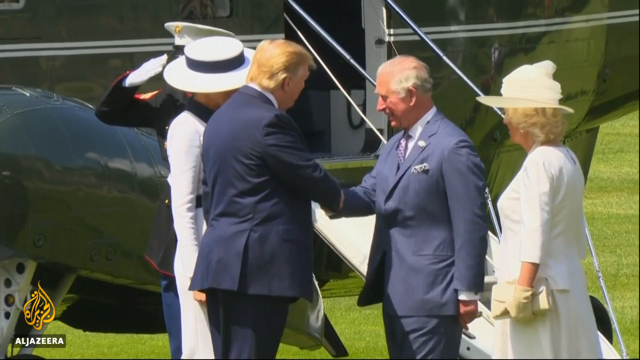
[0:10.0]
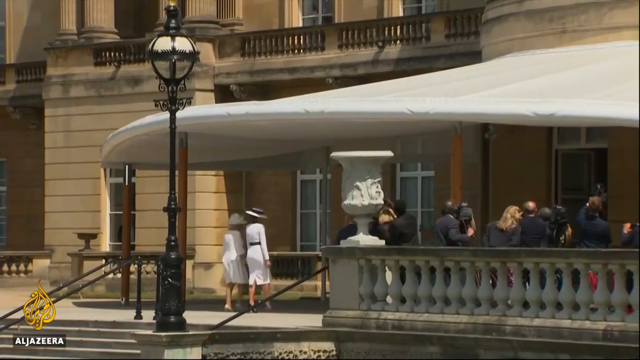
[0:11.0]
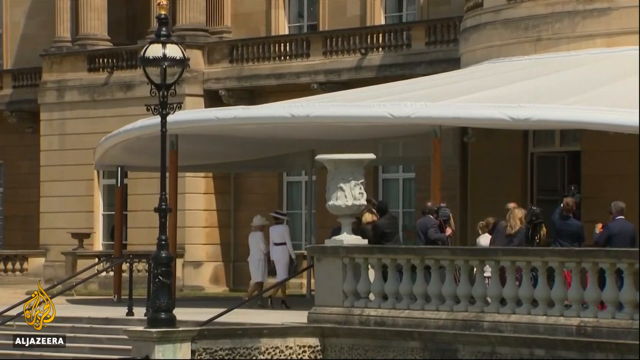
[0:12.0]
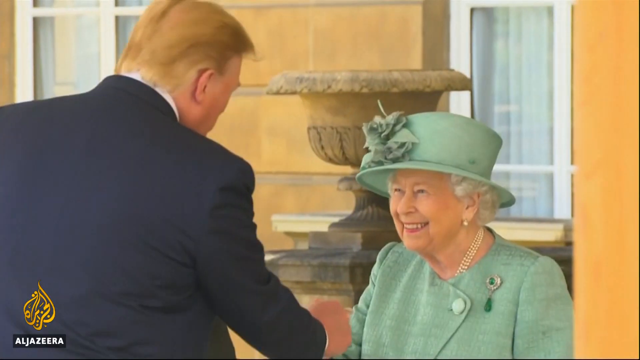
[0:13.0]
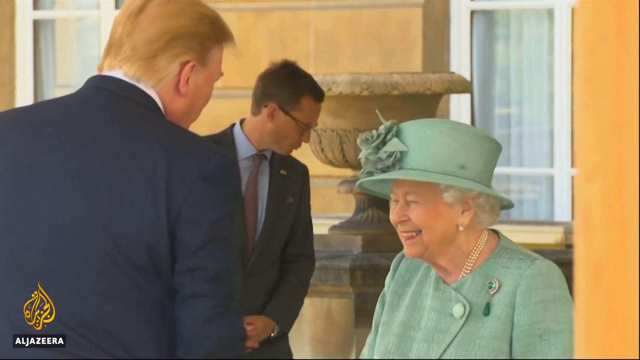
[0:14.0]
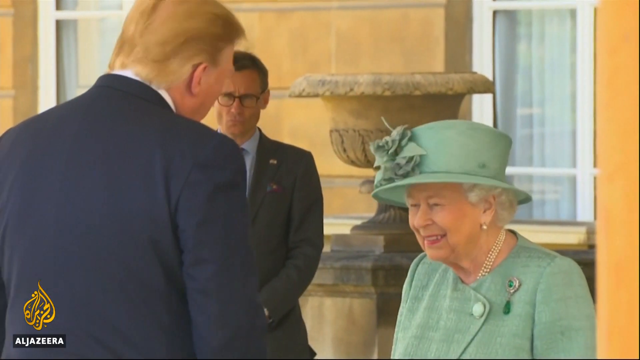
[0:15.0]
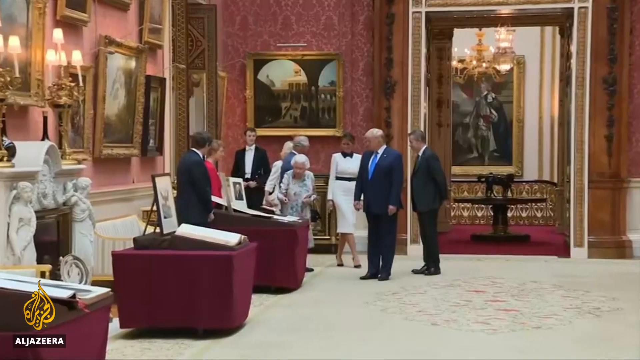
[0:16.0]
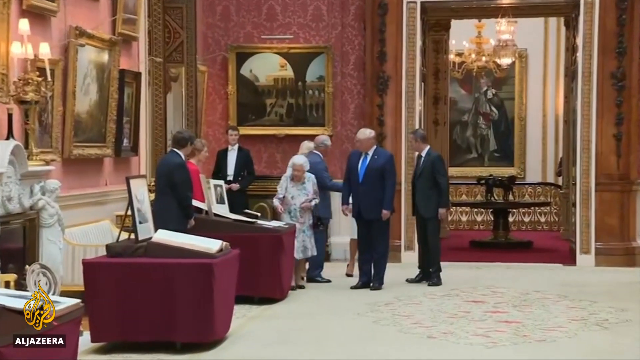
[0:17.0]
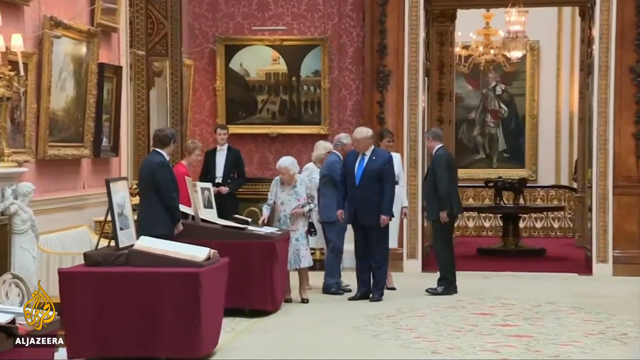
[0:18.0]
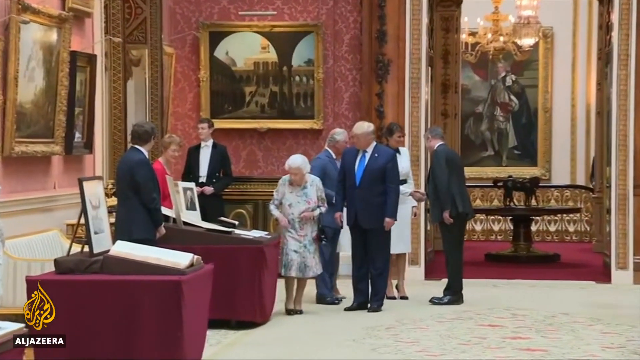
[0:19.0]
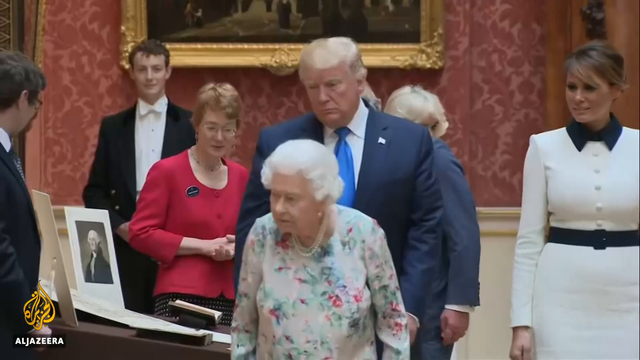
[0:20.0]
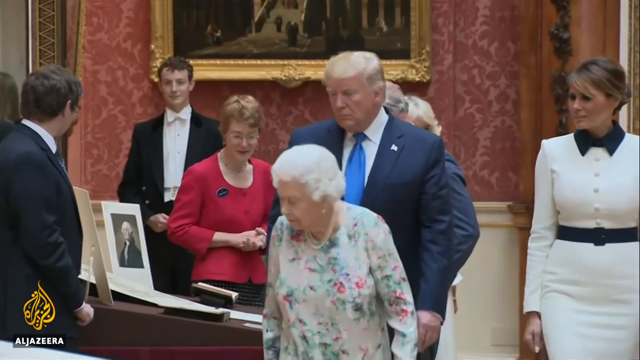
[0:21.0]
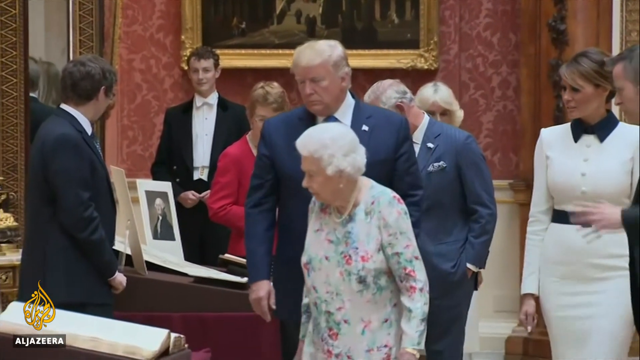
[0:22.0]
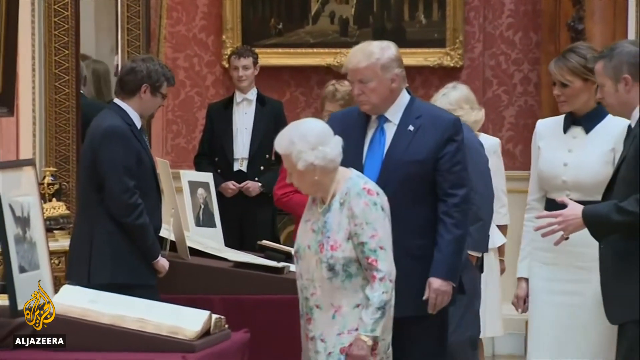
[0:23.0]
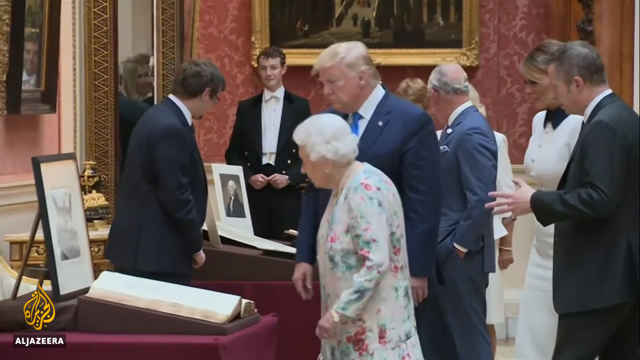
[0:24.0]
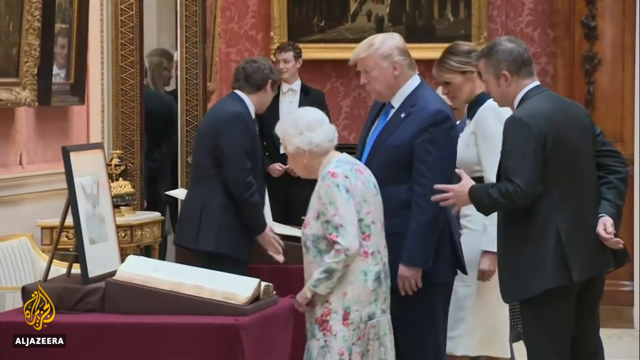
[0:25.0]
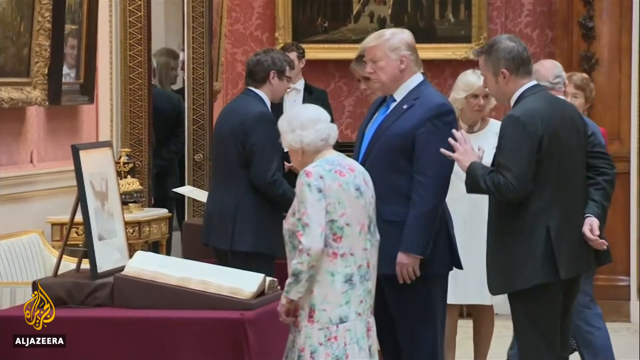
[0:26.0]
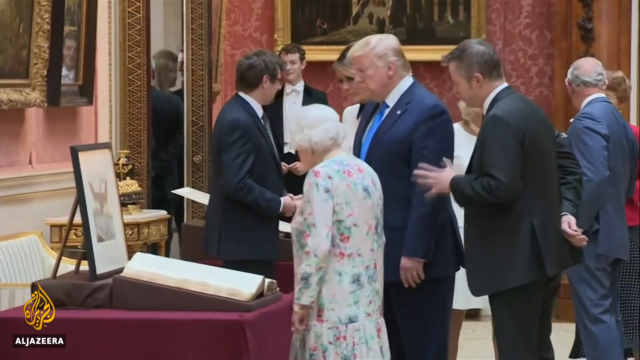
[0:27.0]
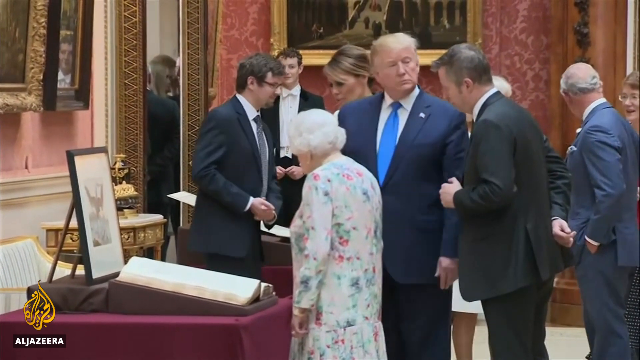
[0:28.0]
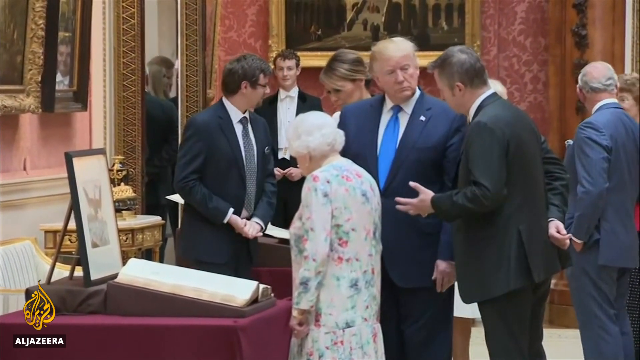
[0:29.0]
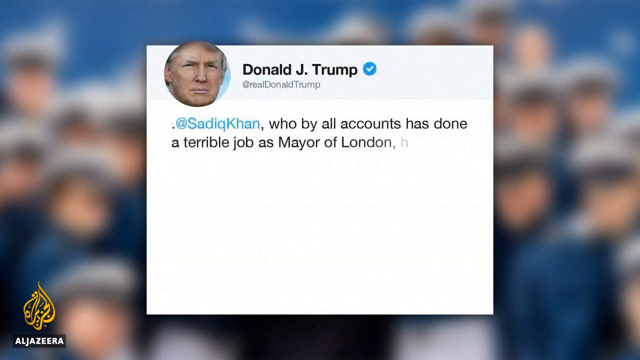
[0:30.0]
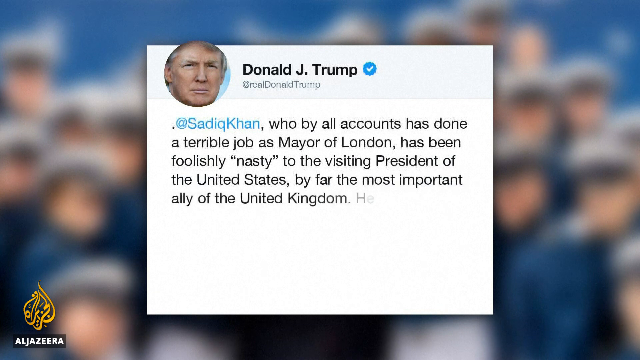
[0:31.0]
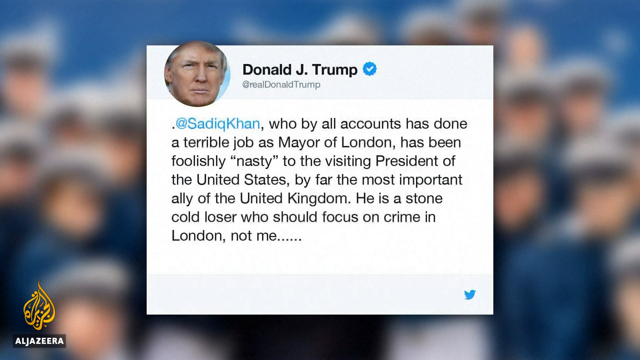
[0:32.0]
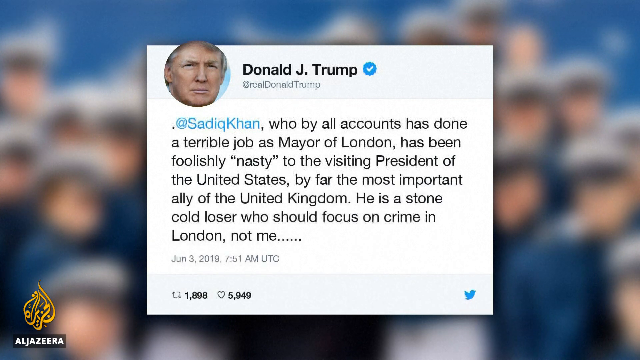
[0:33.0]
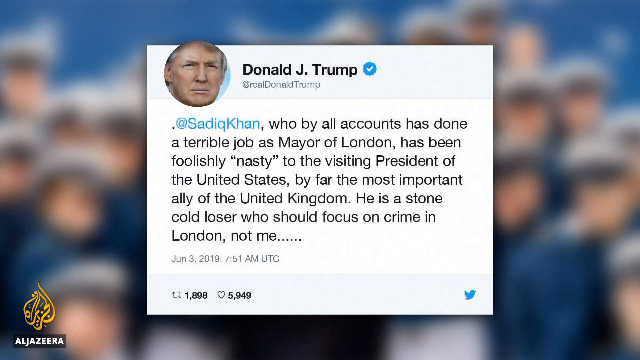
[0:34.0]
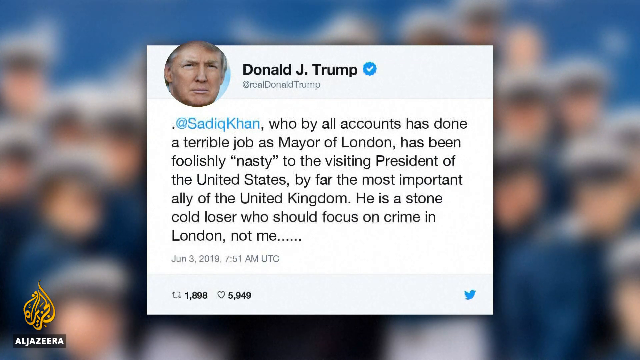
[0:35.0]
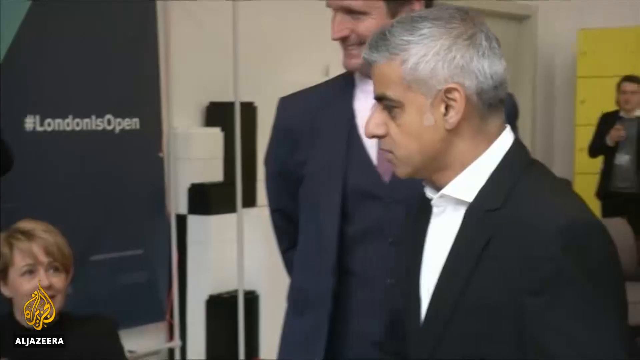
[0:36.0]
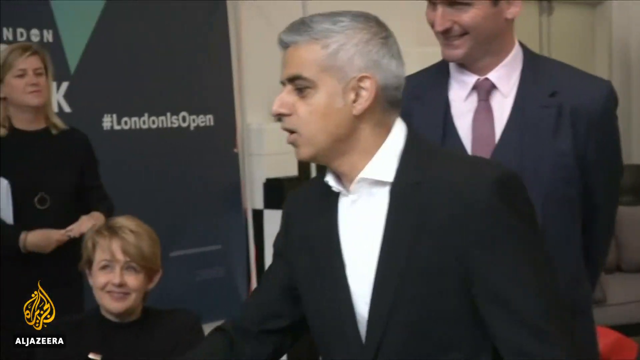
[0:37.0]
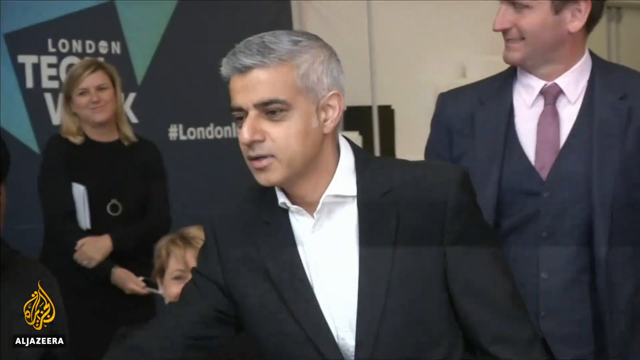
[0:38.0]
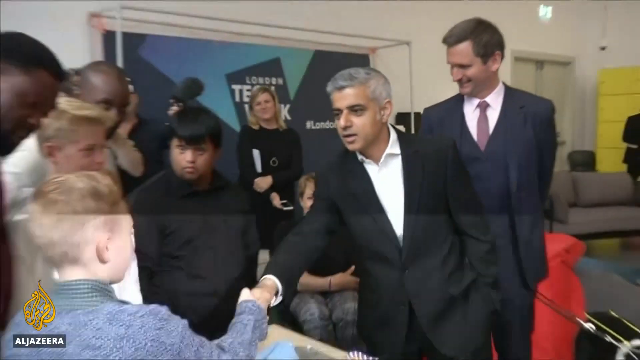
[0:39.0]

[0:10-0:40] Donald Trump and another man shake right hands, Trump facing the right side of the screen and the other man facing the left. On the left, behind Trump, is a woman in a white dress and a white hat; on the right, behind the other man, is another woman in a white dress and a white hat. An airplane is in the background. Next, the two women are seen from behind, walking up to a building, with a group of people standing to their right. Then Trump is on the left side of the screen, seen from the back with his right hand extended, apparently shaking hands with Queen Elizabeth, who wears a teal shirt and a teal hat. Behind Trump a man in a suit stands with his hands in front of him. Inside the building there are pink walls with large pictures all over them. Trump stands in the center of the screen, his chest visible and arms down at his sides, angled slightly toward the left, while Queen Elizabeth walks in front of him. There is something that looks like a place to sign in. The camera zooms in on Queen Elizabeth walking with Trump behind her as people walk up behind him. A man in a black suit behind Trump faces the left side of the screen, his right hand behind him near his butt with the palm facing right, and his left hand extended in front of him with the fingers extended, shaking it. Trump turns and looks at him. Next a tweet appears with an image of Donald Trump at the top and "Donald J. Trump" to the right of it. The tweet reads "Saadi K. Khan, who by all accounts has done a terrible job as mayor of London, has been foolishly nasty to the visiting president of the United States, by far the most important ally of the United Kingdom. He is a stone-cold loser who should focus on crime in London, not me." The background is blurry. Then a man in a black suit faces the left side of the screen, extending his right arm at the bottom of the screen, while a man in a blue suit stands behind him with his arms behind his back. The man shakes hands with kids.